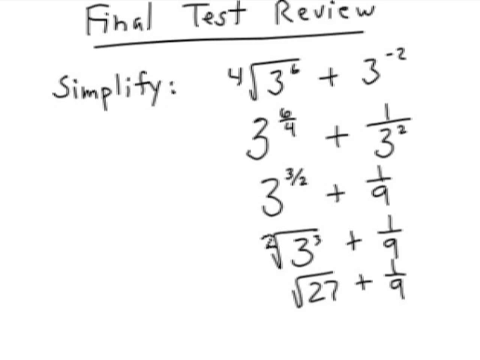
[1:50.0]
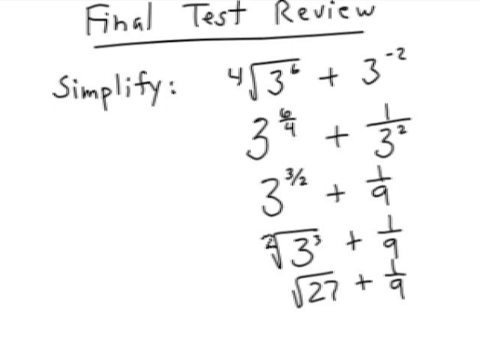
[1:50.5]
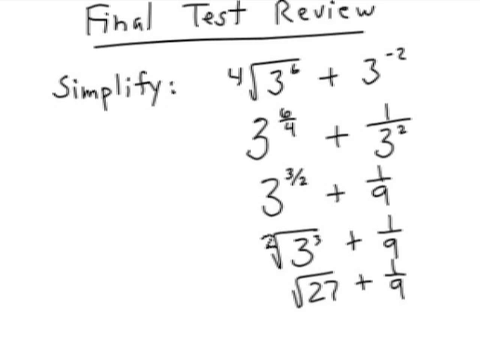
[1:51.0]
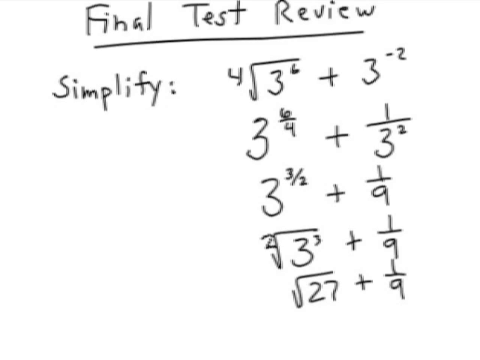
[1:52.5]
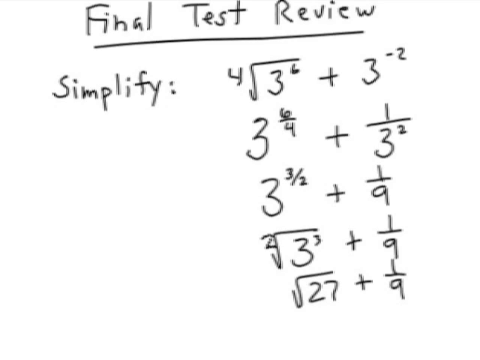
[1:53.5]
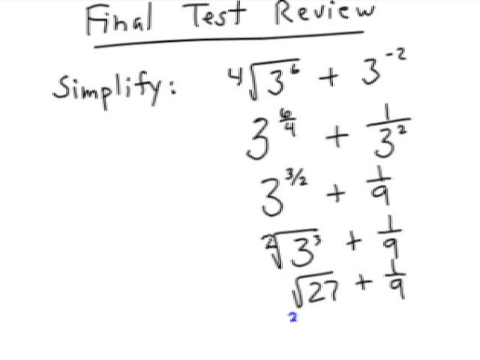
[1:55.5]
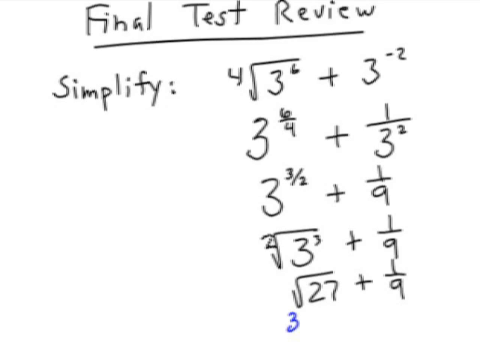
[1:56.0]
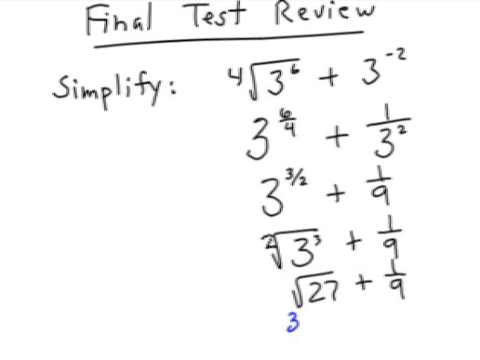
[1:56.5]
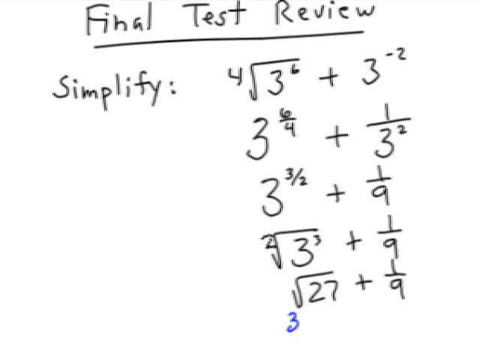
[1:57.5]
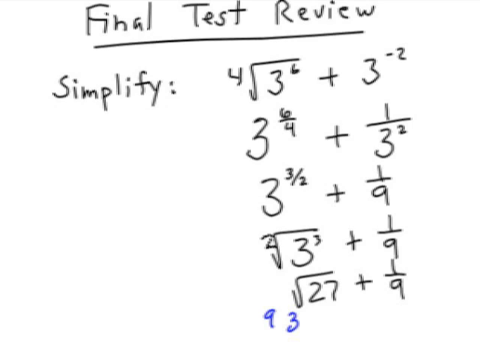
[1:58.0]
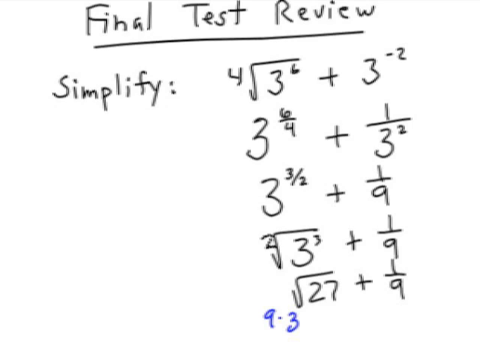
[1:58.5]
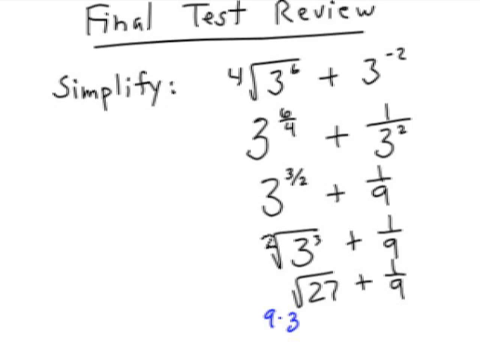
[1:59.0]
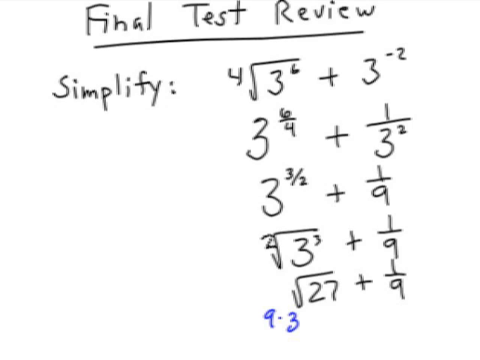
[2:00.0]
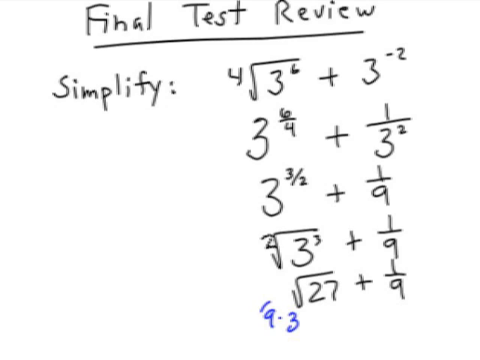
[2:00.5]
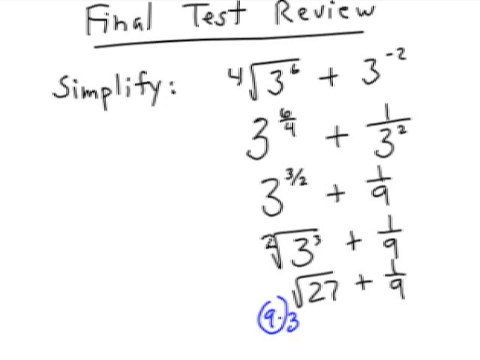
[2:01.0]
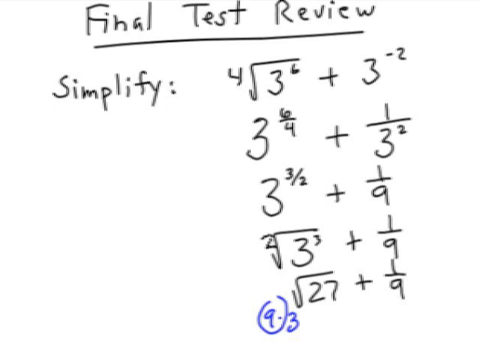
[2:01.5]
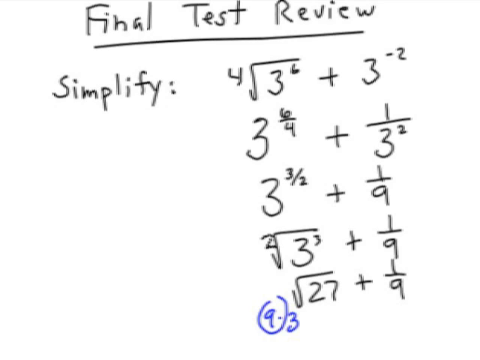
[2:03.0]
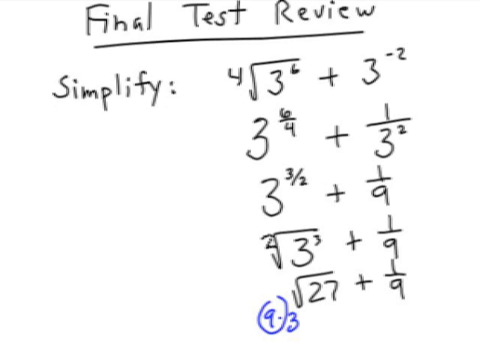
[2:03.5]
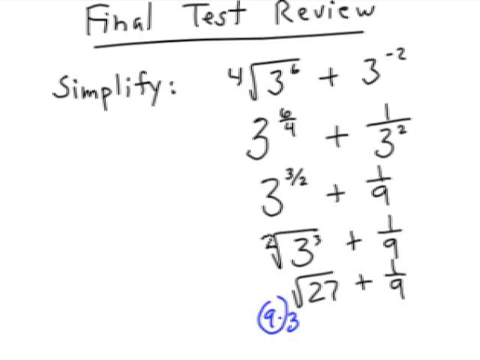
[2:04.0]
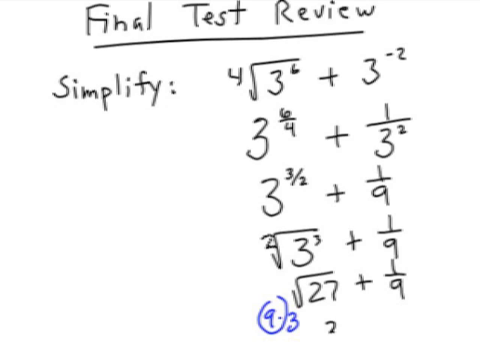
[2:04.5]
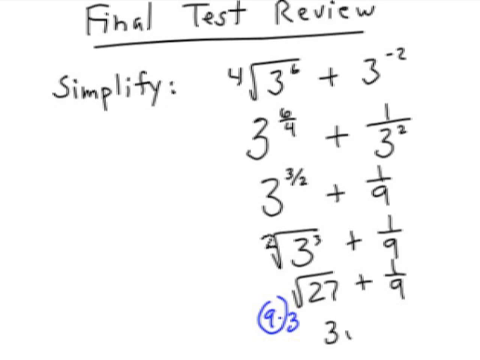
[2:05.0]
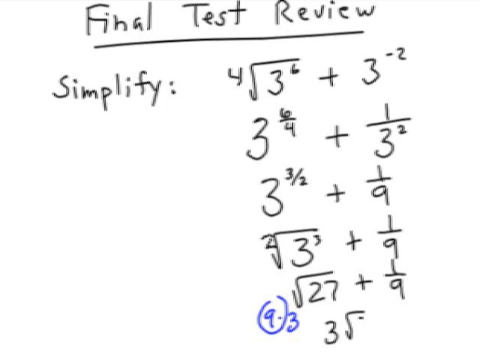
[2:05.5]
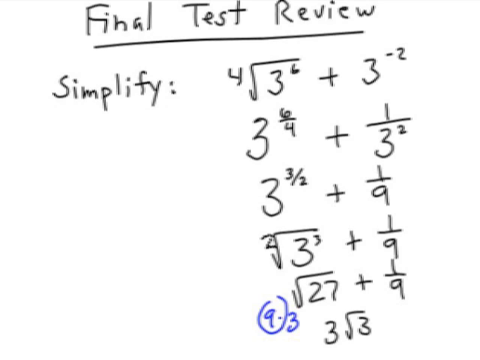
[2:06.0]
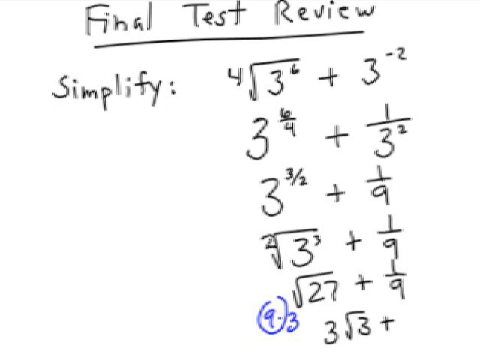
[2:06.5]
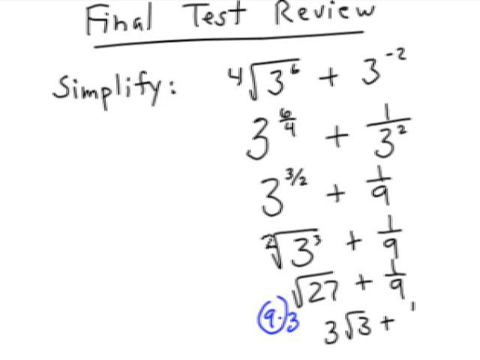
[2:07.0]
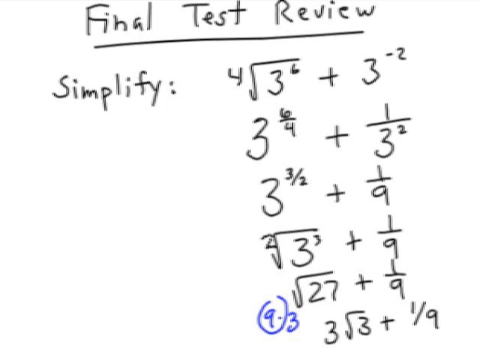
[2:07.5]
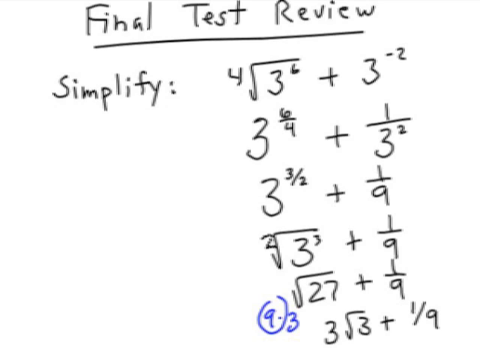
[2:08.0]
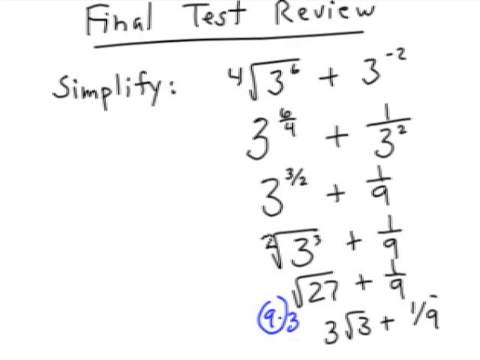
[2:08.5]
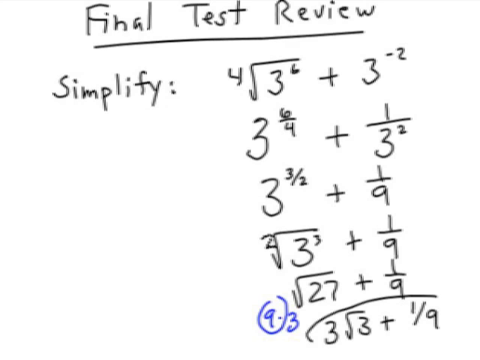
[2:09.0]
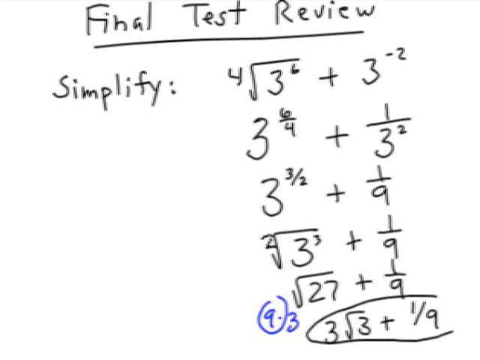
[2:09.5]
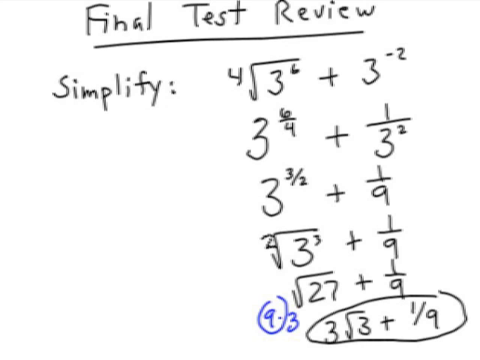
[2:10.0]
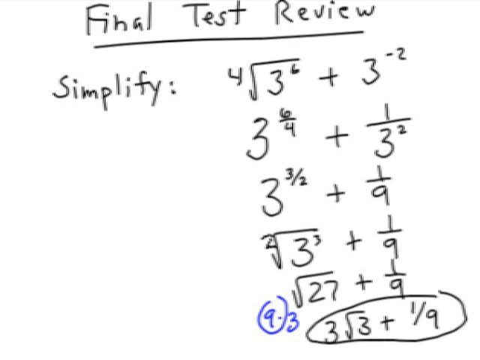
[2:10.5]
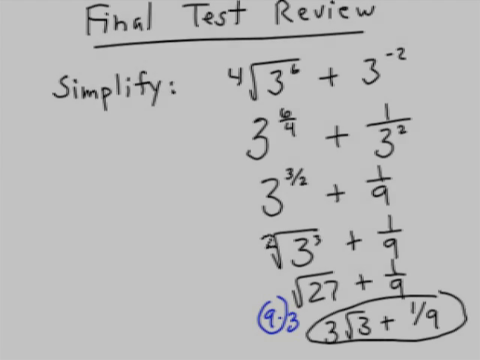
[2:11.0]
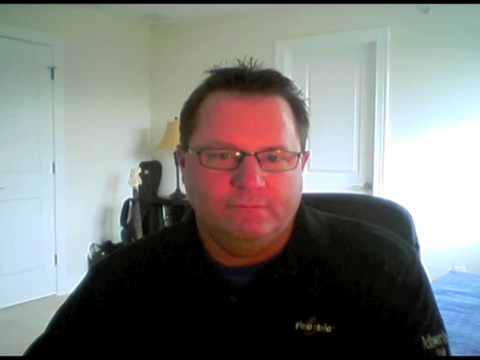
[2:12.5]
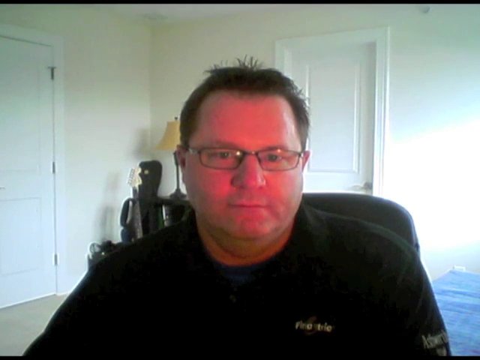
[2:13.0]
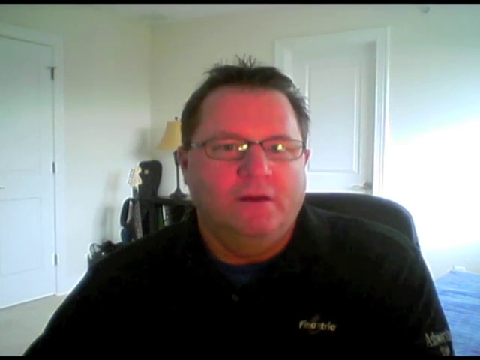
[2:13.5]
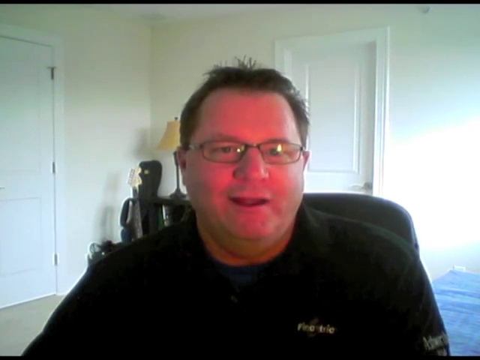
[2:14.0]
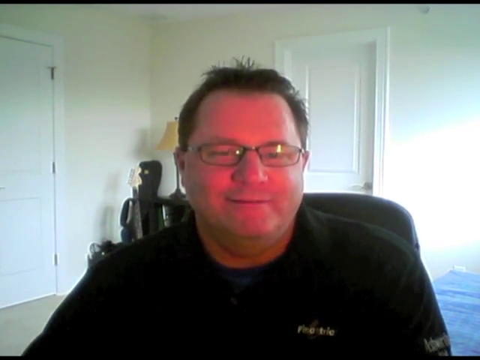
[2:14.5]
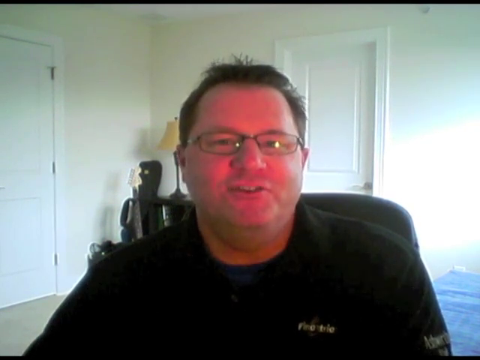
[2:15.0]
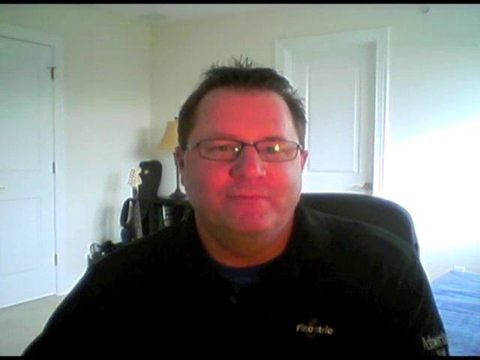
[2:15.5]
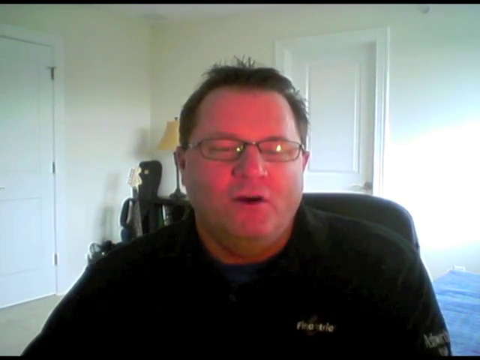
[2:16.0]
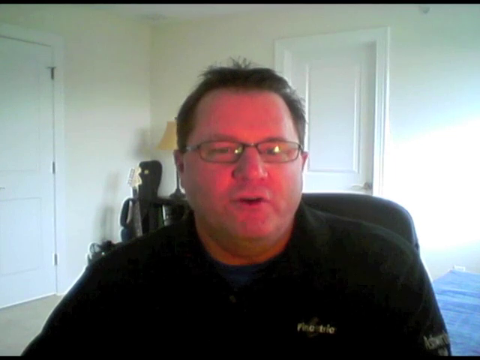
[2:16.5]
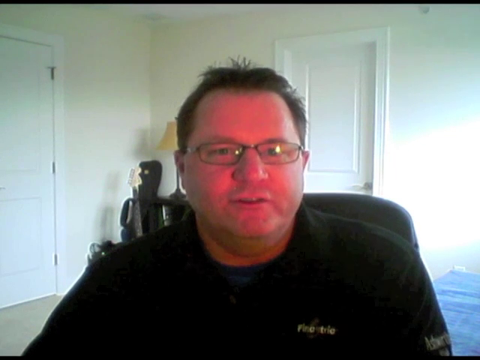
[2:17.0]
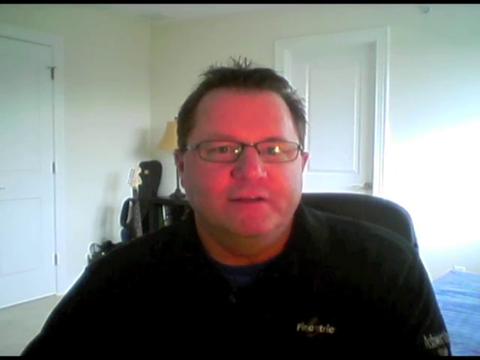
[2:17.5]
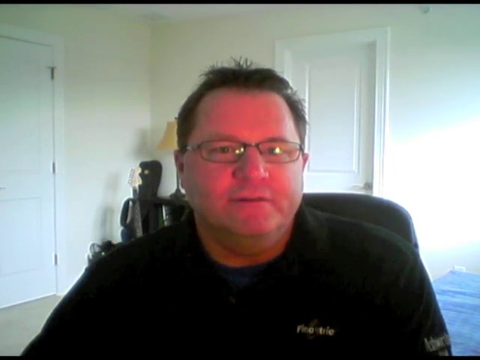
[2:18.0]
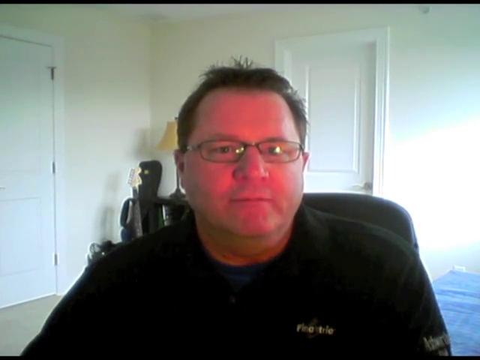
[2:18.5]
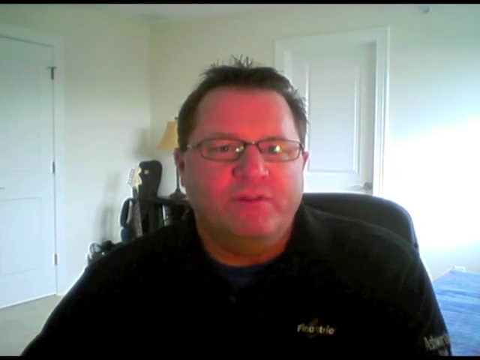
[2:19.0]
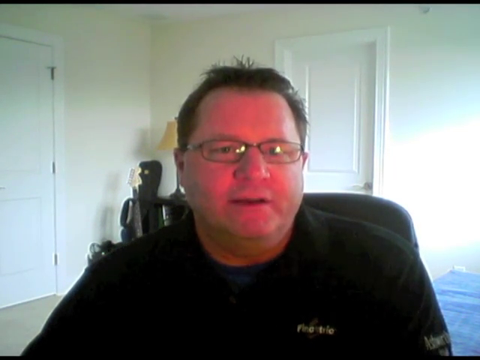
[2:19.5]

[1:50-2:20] A solid white background in the center has two large black borders. Handwritten words at the top read "final test review," with an underline that has a slight wave or bend to it. Underneath, "simplify" with a colon is followed by a small space and the expression 3 to the 6th plus 3 to the negative 2nd divided by 4. Below, the work is already broken down into 3 times 6 over 4 plus 1 over 3 to the 2nd, then changed to 3 times 3 over 2 plus 1 over 9, then to 3 to the 3rd plus 1 over 9 divided by 2, and finally, with 3 to the 3rd multiplied out, to 27 plus 1/9 divided by 2.